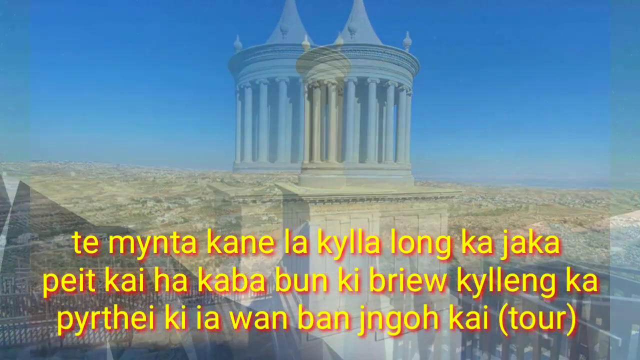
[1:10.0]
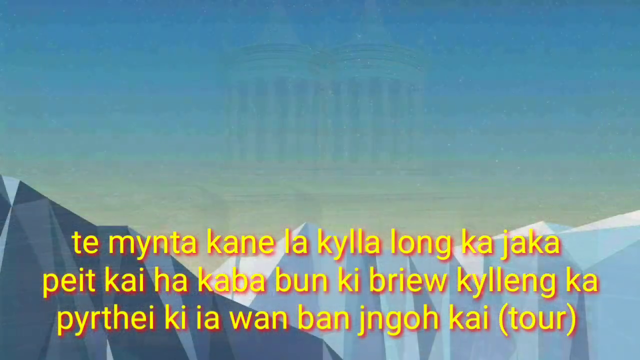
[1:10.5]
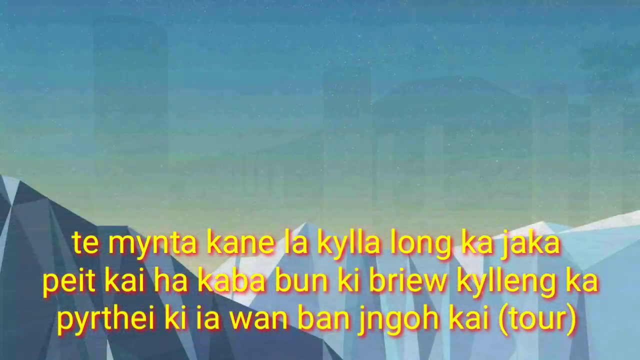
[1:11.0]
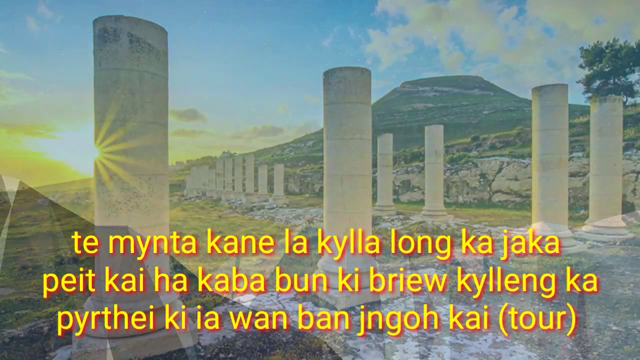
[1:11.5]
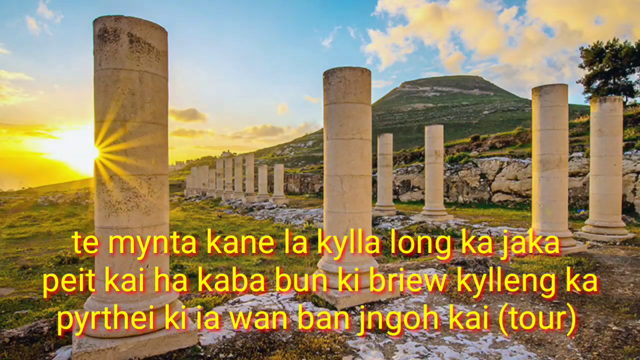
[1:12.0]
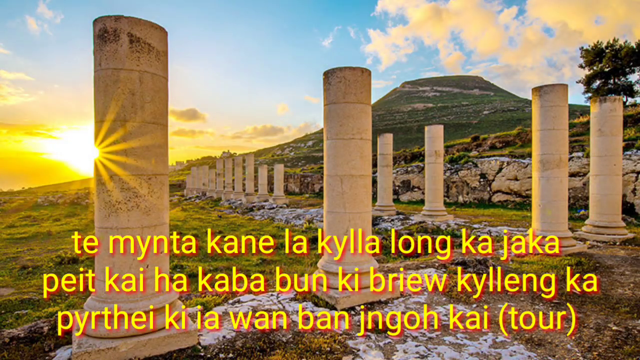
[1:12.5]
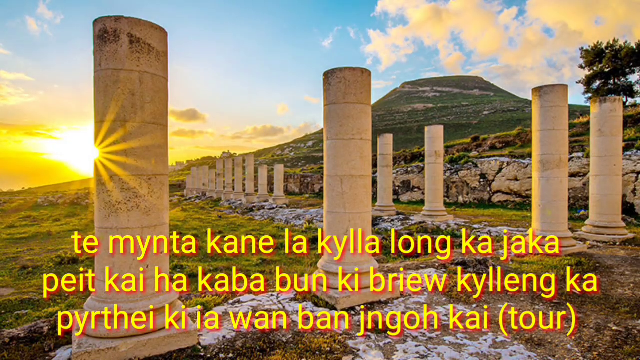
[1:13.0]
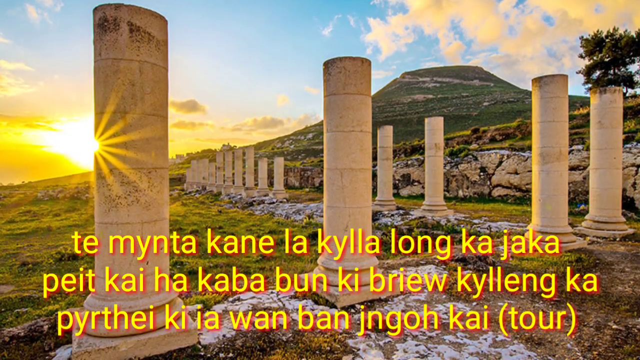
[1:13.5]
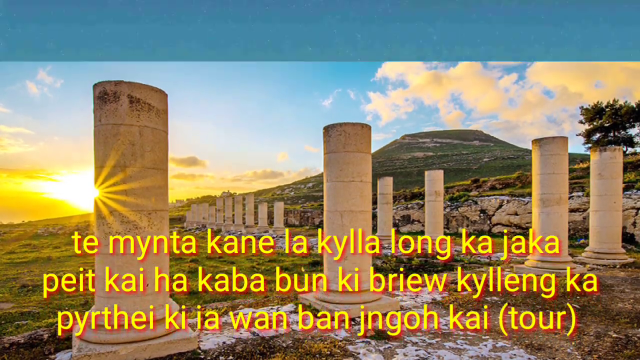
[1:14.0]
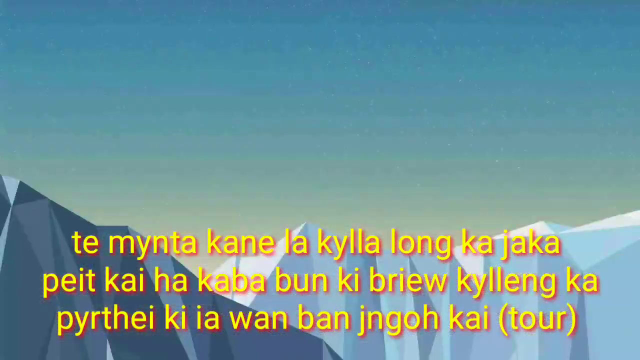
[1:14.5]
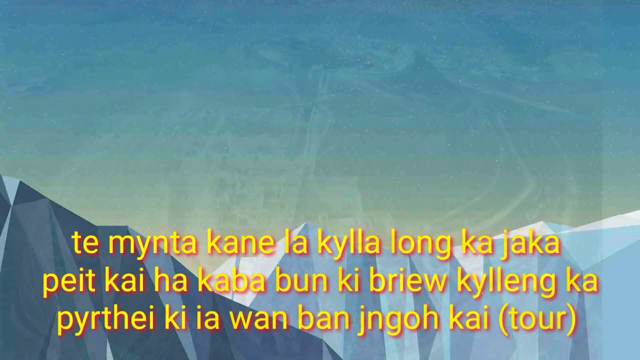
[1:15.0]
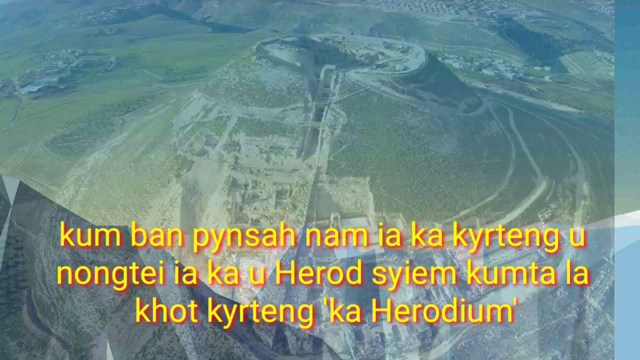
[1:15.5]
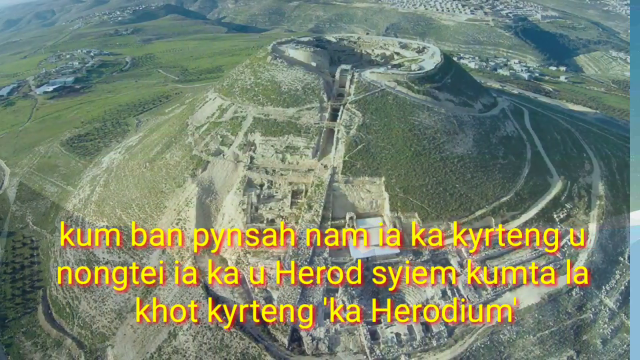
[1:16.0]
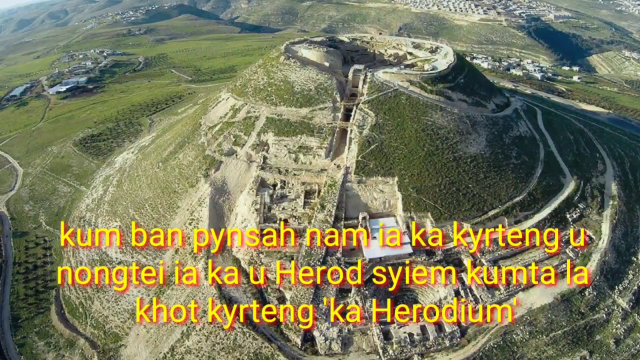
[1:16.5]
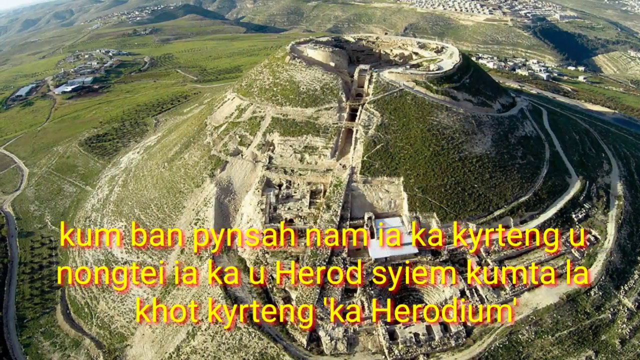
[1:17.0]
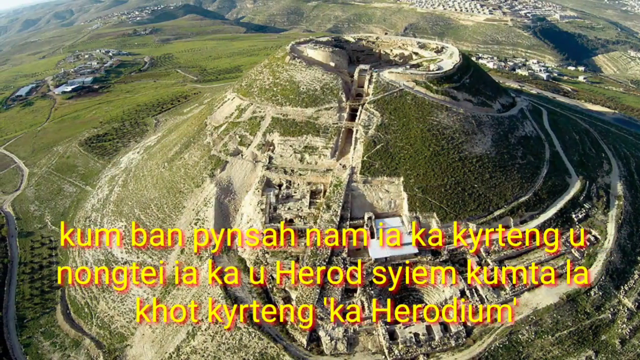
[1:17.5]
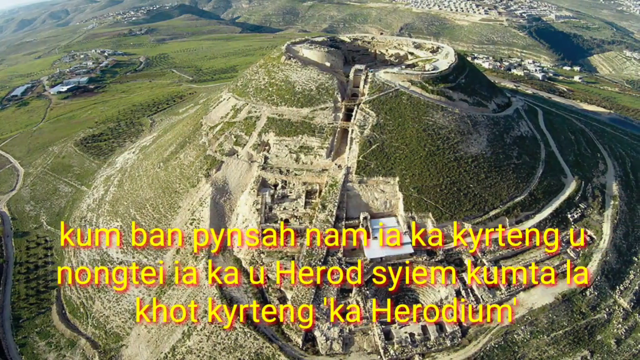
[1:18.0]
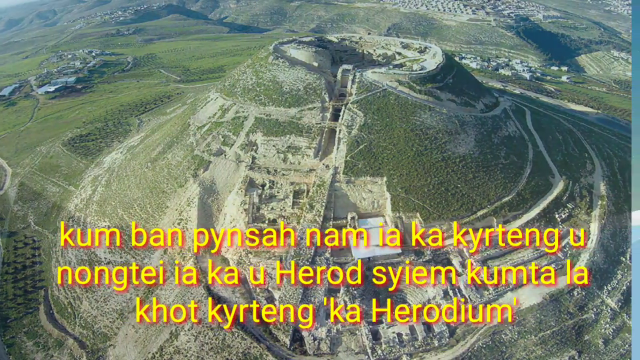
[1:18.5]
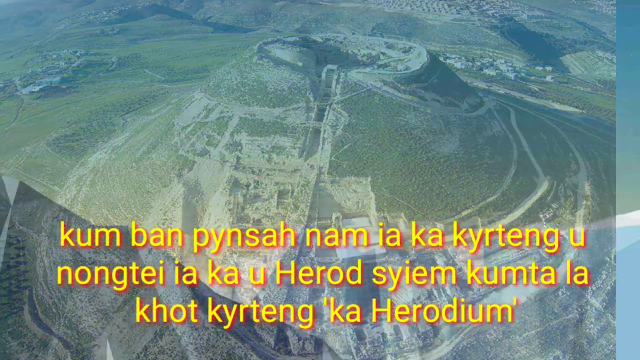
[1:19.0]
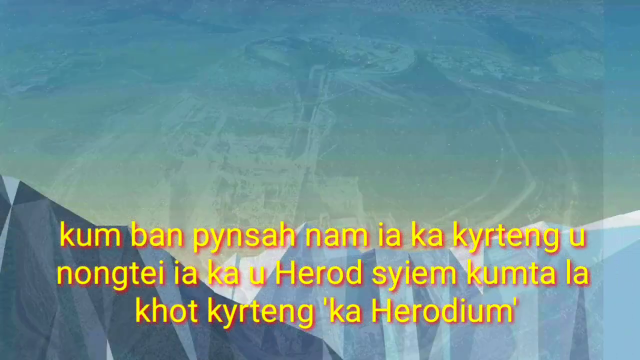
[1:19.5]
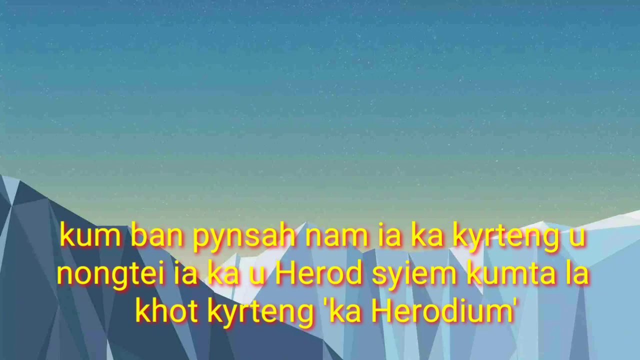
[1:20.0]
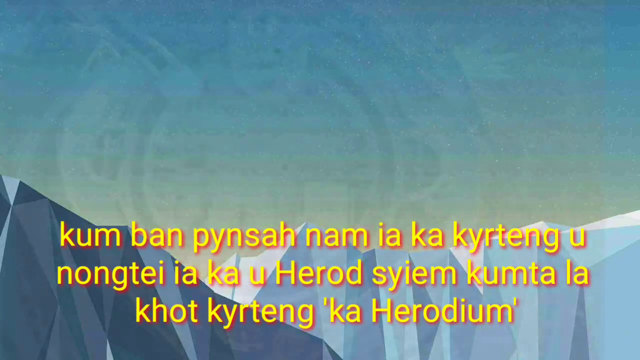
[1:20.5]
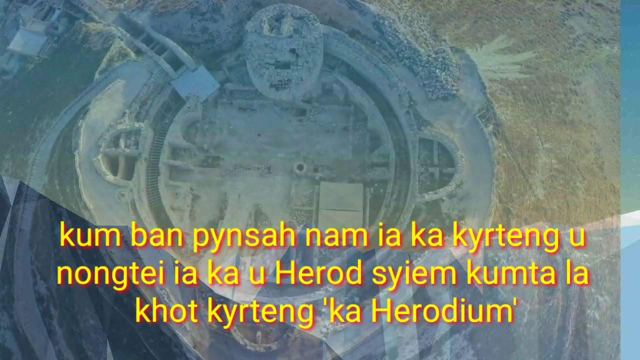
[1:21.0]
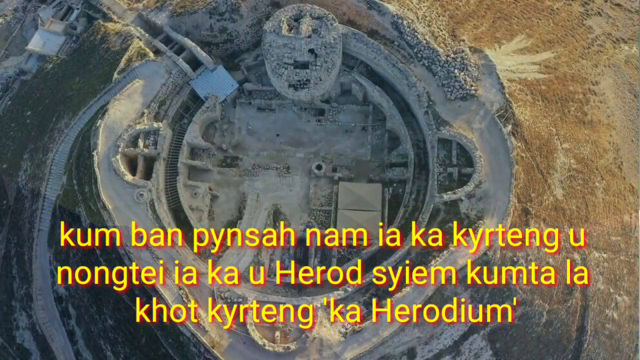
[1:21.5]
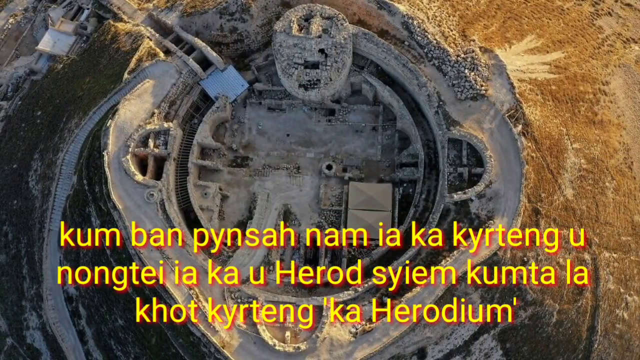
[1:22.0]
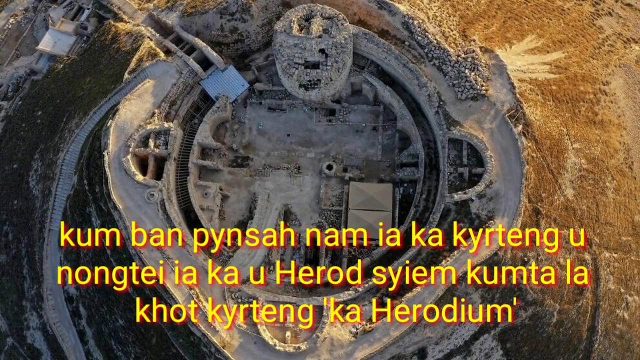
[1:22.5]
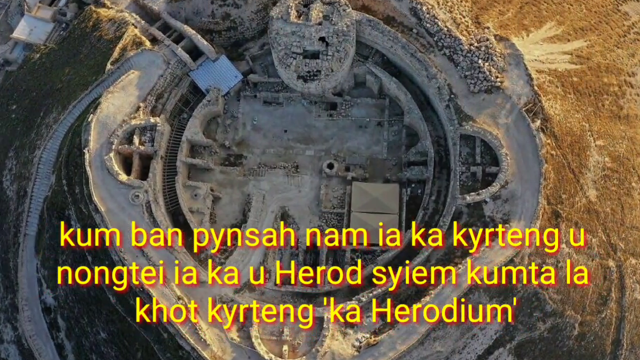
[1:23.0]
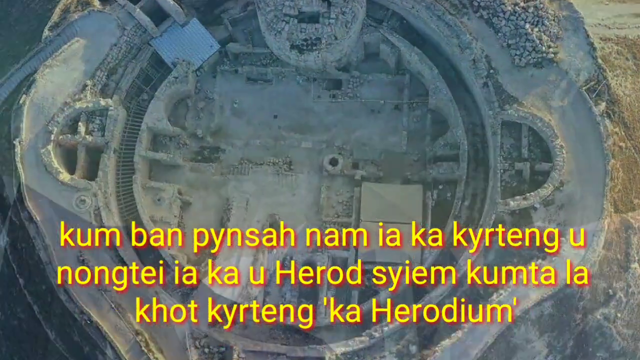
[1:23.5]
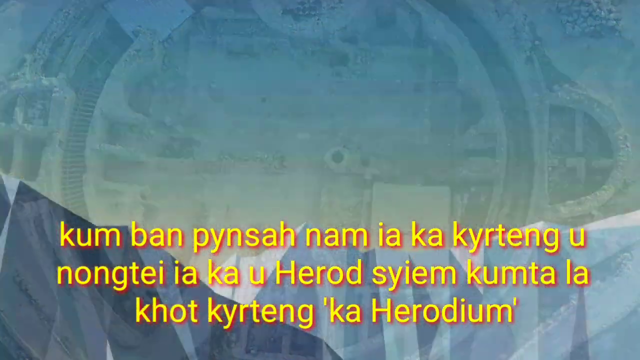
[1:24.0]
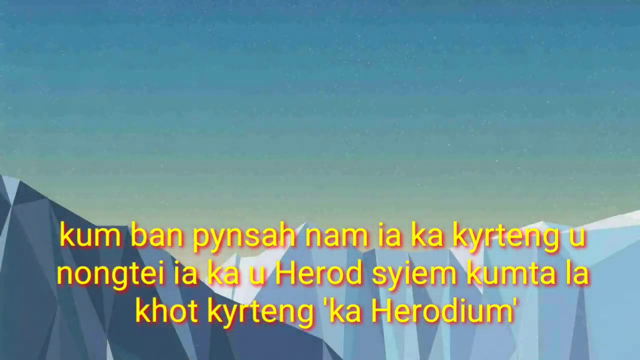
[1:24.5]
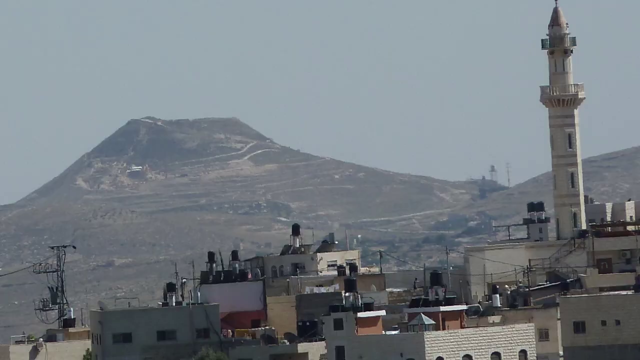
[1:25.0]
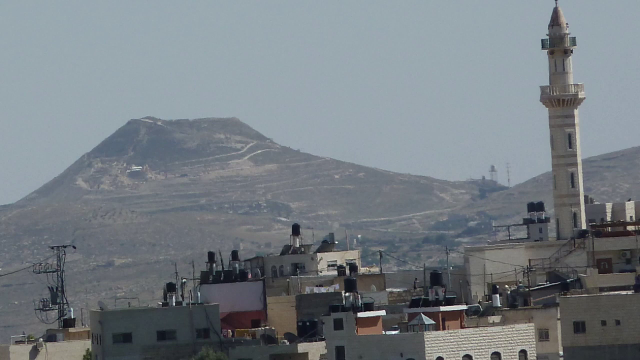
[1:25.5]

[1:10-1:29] The text keeps scrolling and images transition quickly, each lasting less than a second. The images, presumably all of Herodium, show various deteriorating stone structures; many appear to be built into hills, with the tops of the hills excavated for the structures. The structures appear to have been well made originally but are now deteriorated, broken, and barely standing.